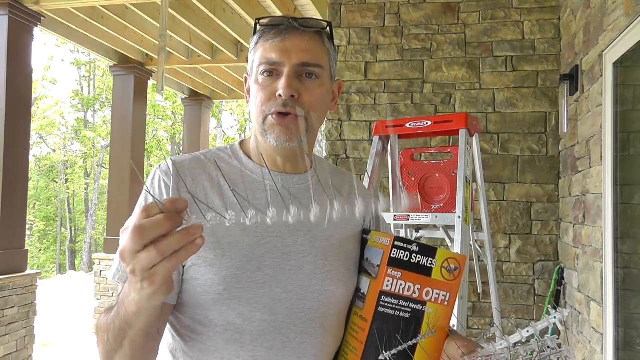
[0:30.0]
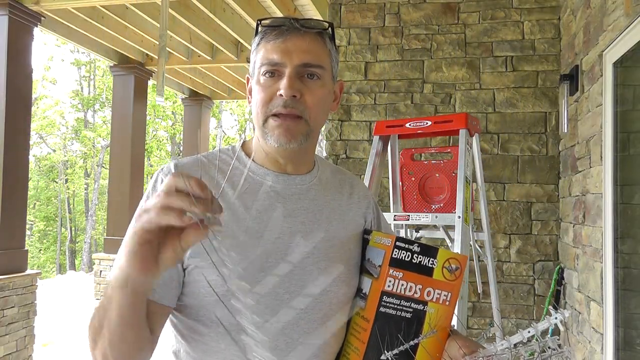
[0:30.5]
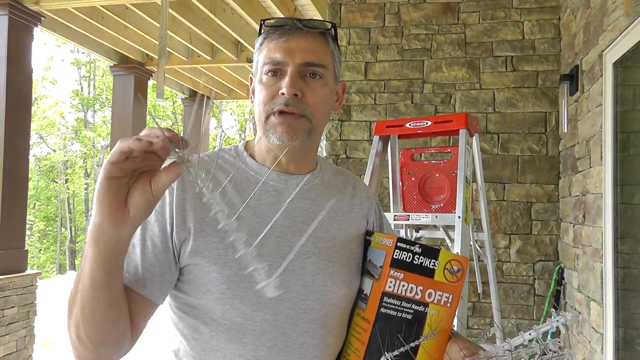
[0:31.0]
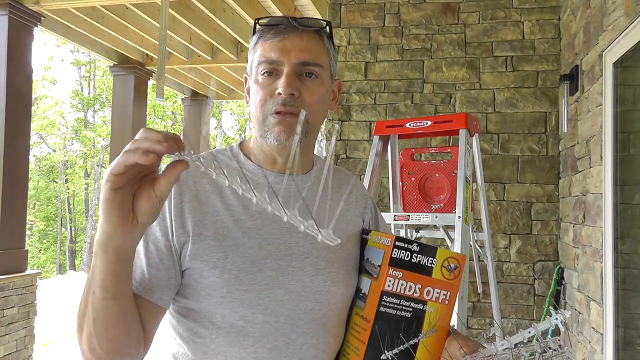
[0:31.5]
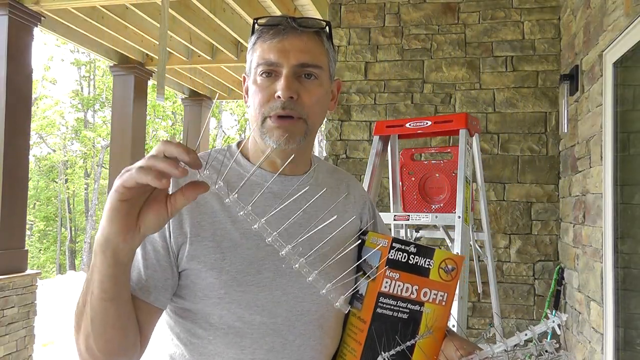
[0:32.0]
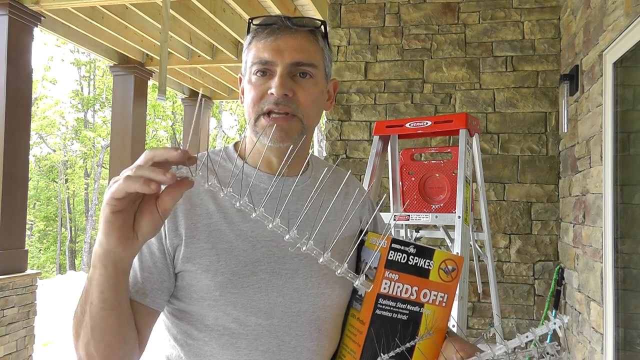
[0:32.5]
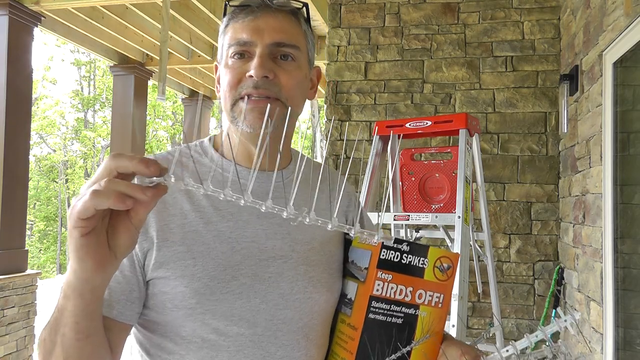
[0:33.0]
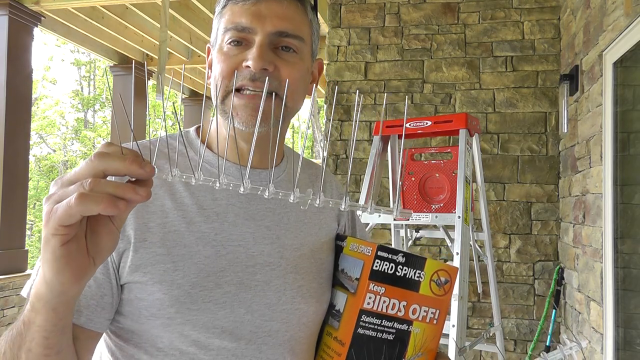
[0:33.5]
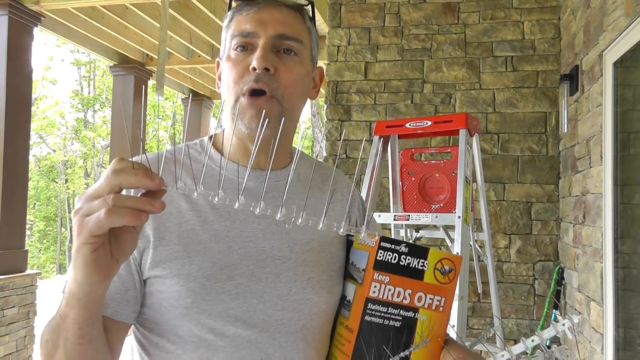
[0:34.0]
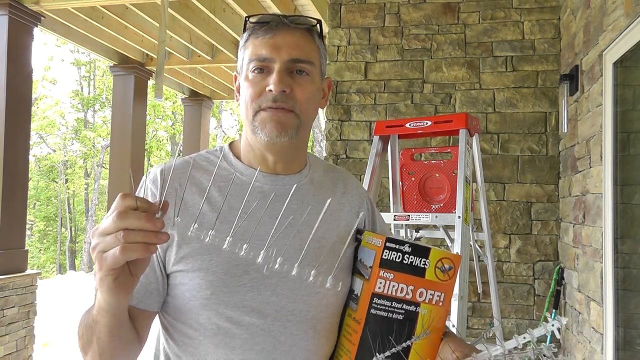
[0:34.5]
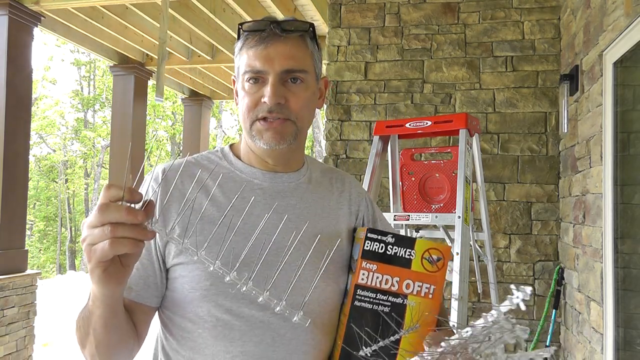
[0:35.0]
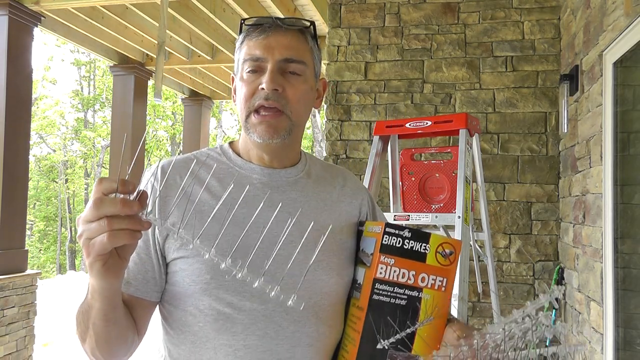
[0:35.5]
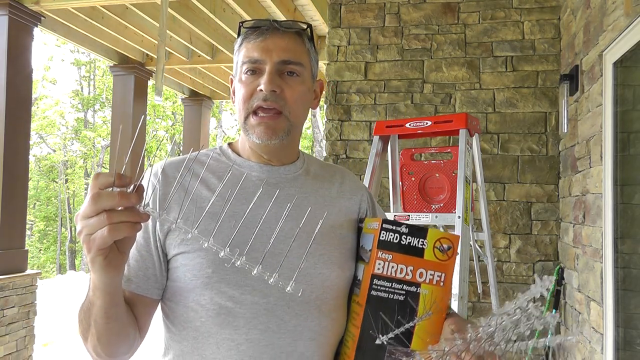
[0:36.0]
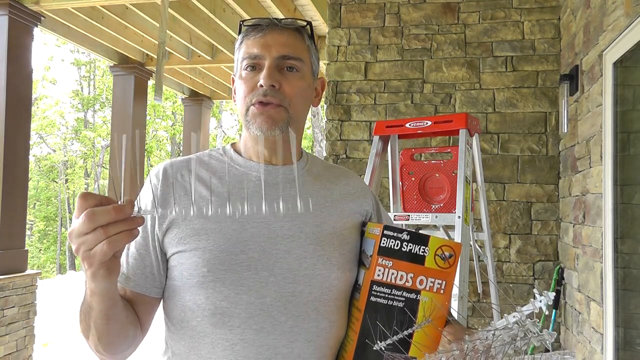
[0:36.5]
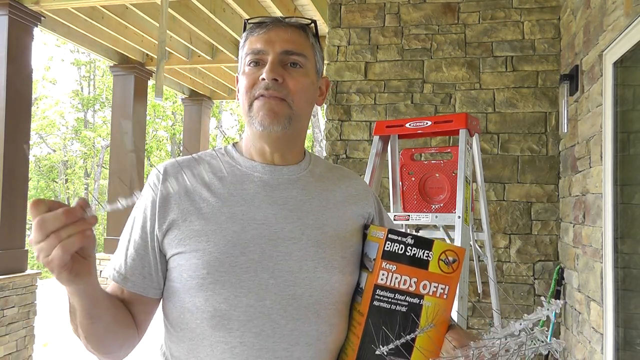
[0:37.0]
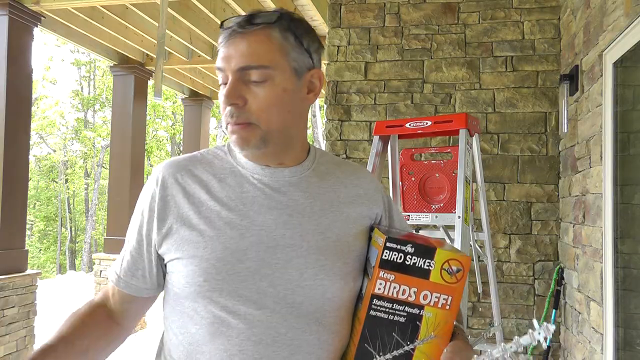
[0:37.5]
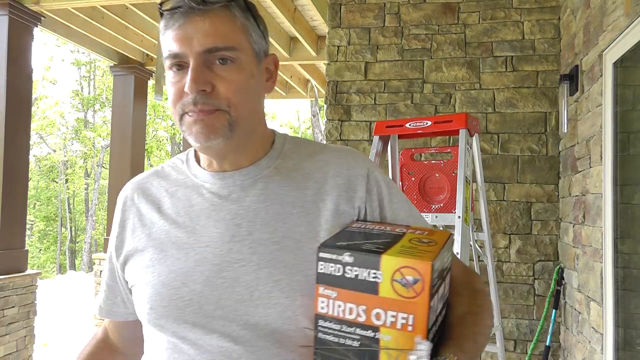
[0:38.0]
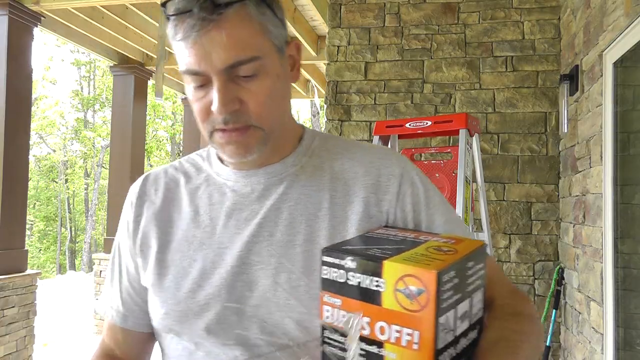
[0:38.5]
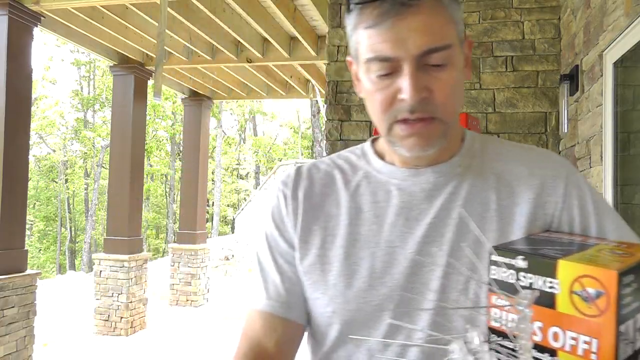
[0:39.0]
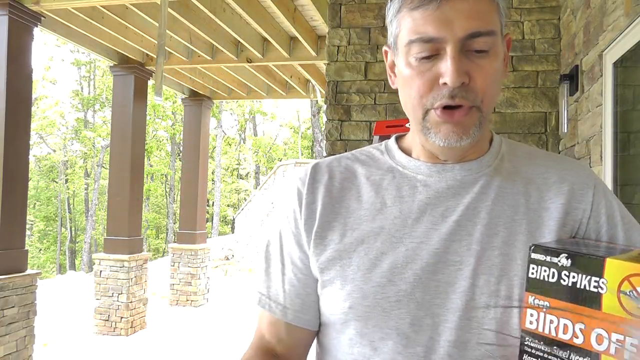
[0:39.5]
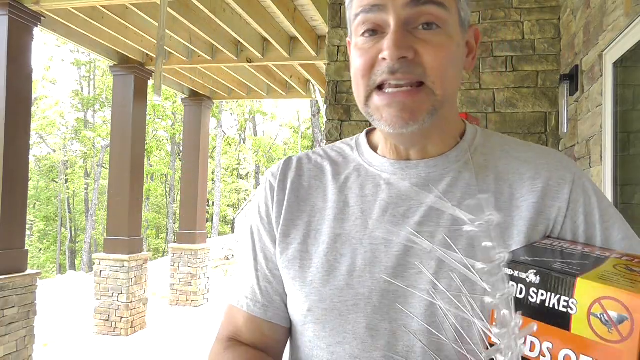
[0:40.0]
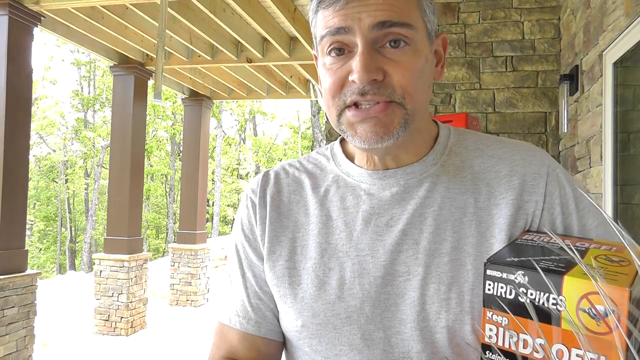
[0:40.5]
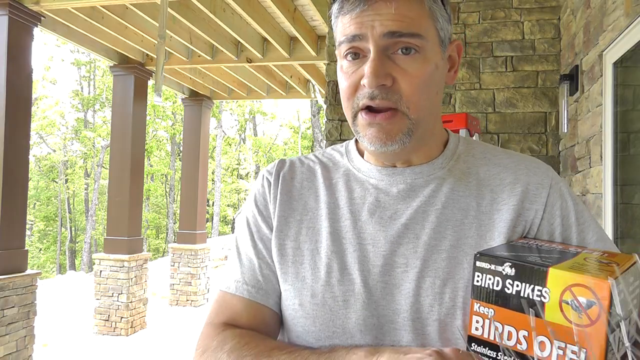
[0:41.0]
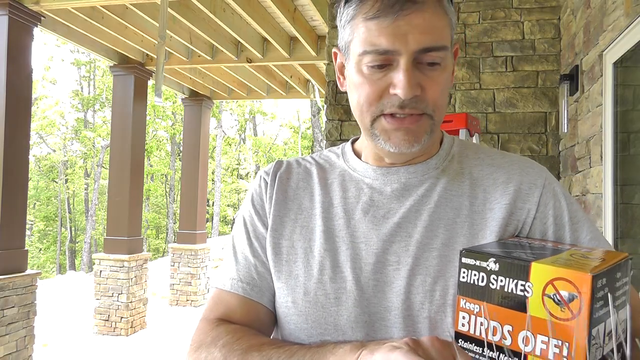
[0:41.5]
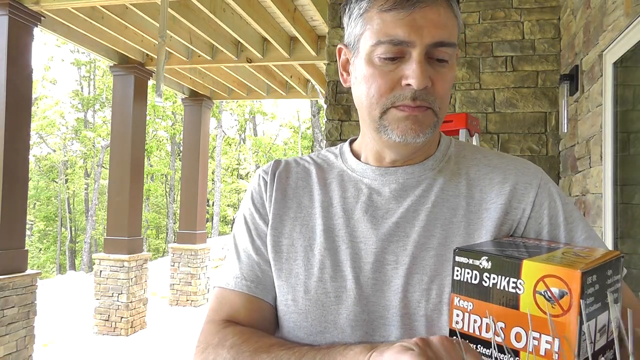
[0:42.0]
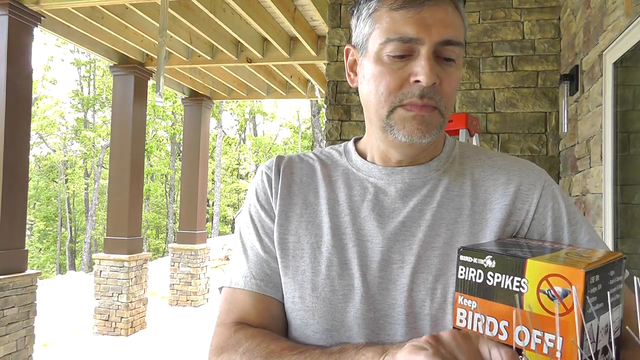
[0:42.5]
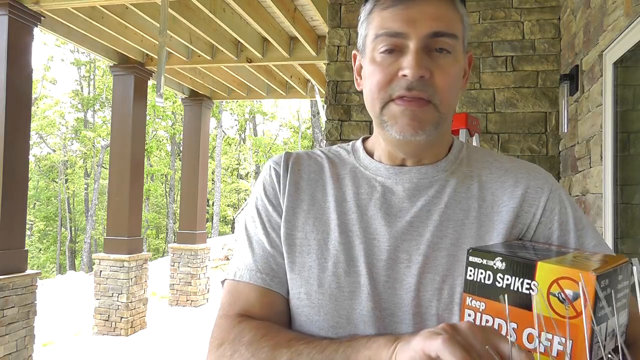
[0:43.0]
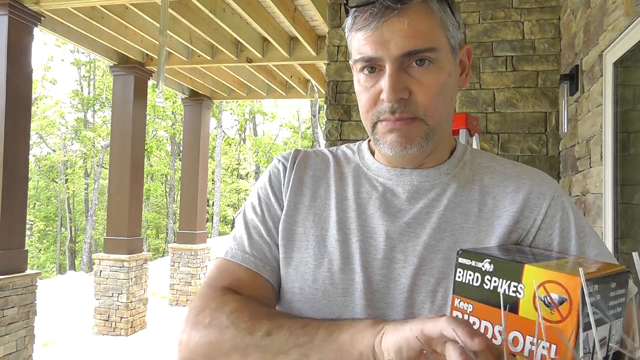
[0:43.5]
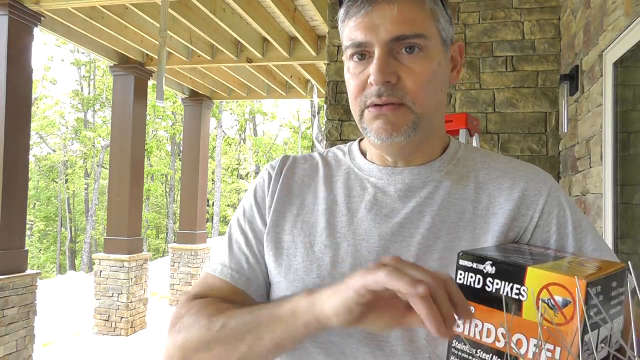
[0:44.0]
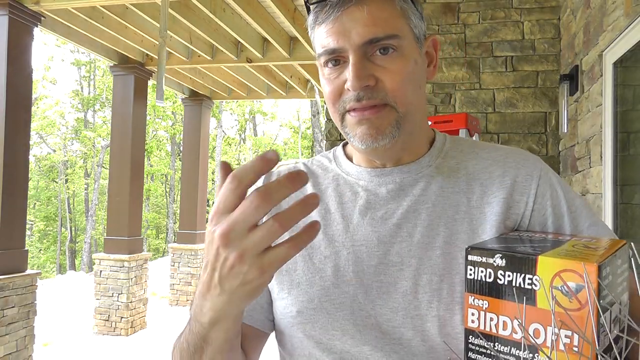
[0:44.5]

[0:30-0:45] In this video, titled Harmless Way to Stop Birds from Building Nests, a man in his mid-forties with gray hair, a gray beard and eyeglasses perched on top of his head stands on his porch in a white t-shirt. A product box labeled "Birds Off! Bird spikes" is tucked underneath his arm, and he holds the actual bird spikes in his hand. As he shows them to the camera, they appear to have a flexible, clear plastic bottom with probably 20 to 30 metal spikes sticking out of the plastic. Behind him in the background is an aluminum ladder with a red plastic paint tray and a red top, and three wooden columns to his right, on the viewer's left, support the roof of the porch.